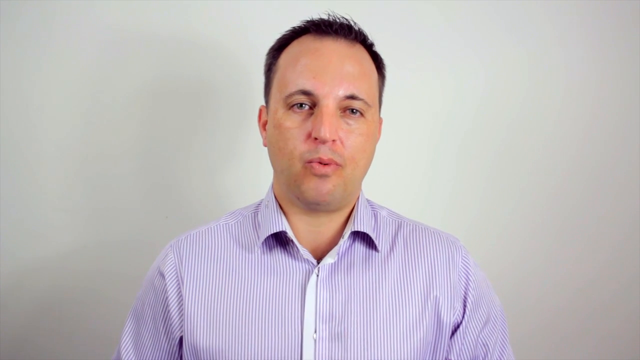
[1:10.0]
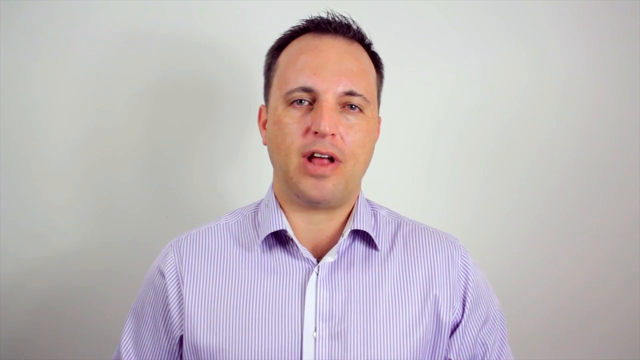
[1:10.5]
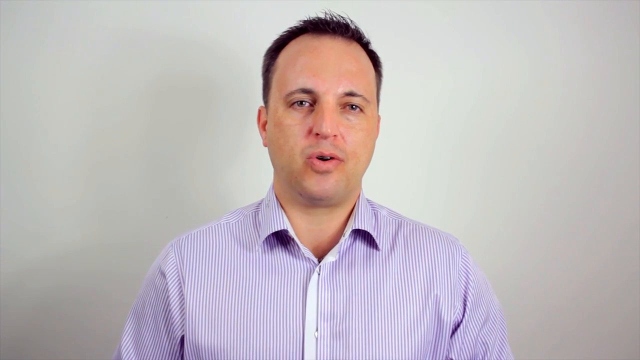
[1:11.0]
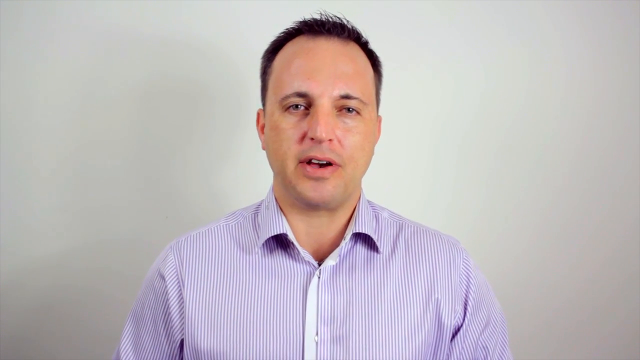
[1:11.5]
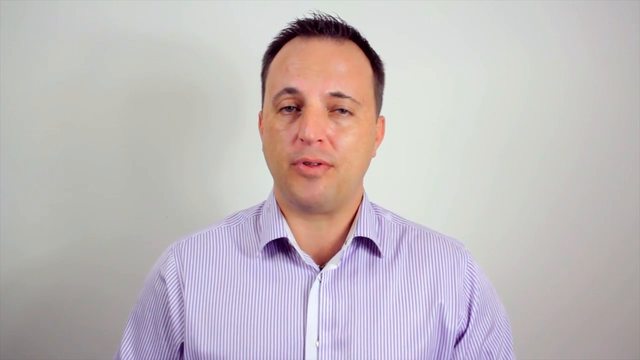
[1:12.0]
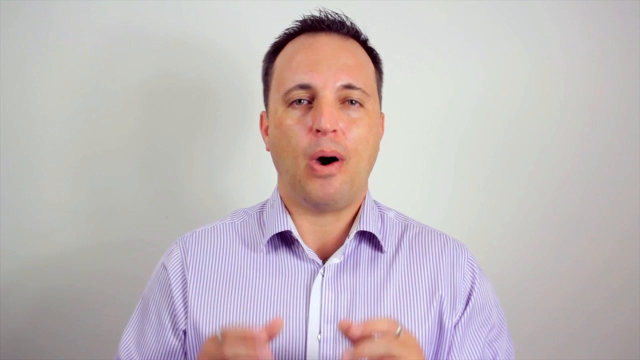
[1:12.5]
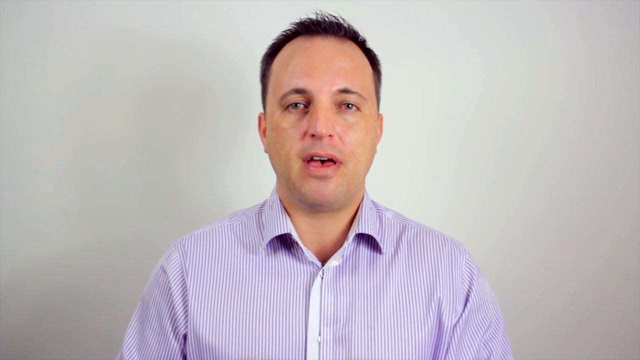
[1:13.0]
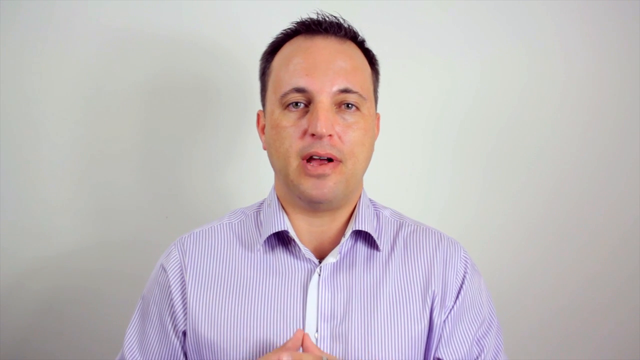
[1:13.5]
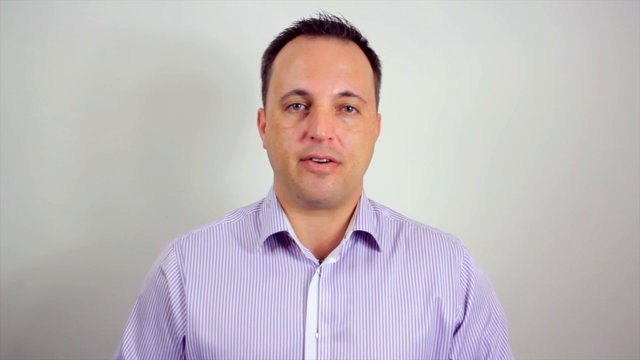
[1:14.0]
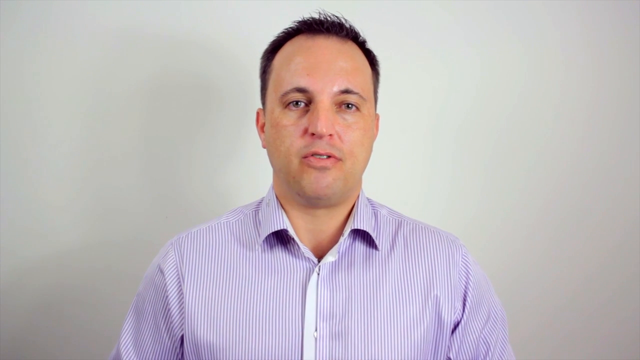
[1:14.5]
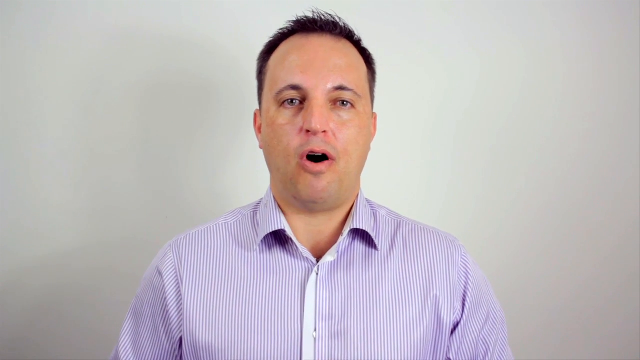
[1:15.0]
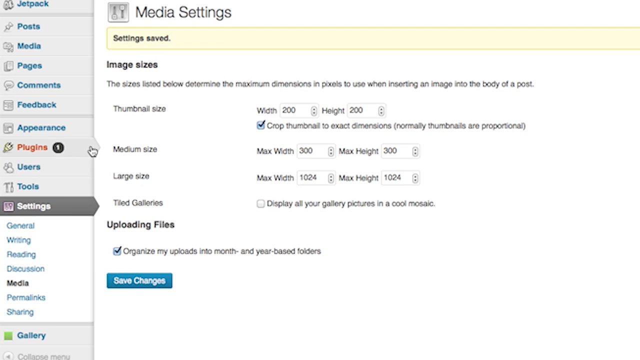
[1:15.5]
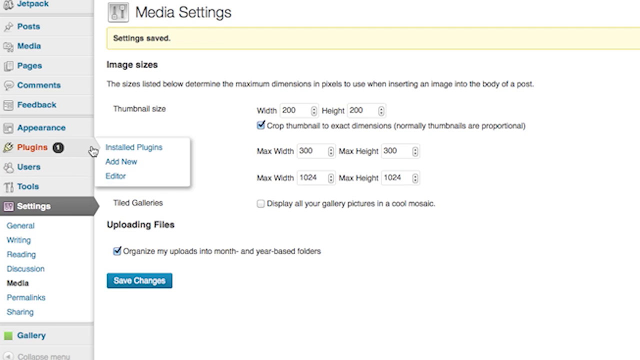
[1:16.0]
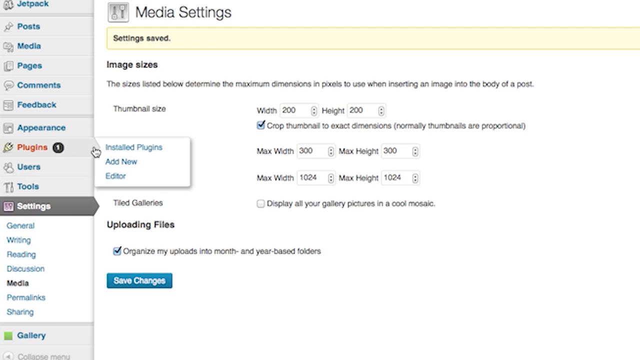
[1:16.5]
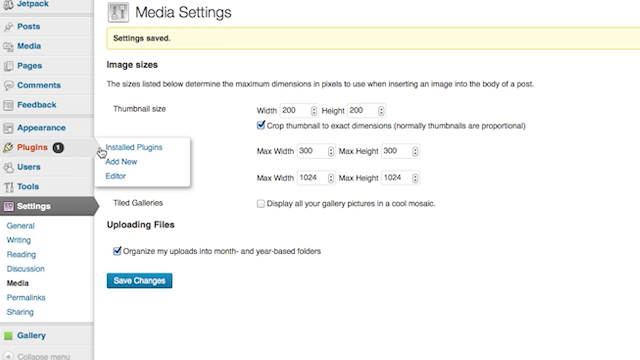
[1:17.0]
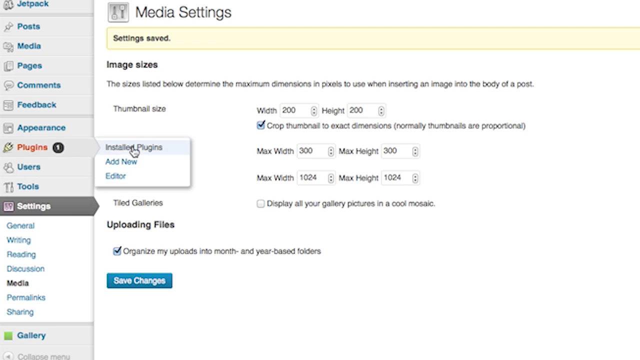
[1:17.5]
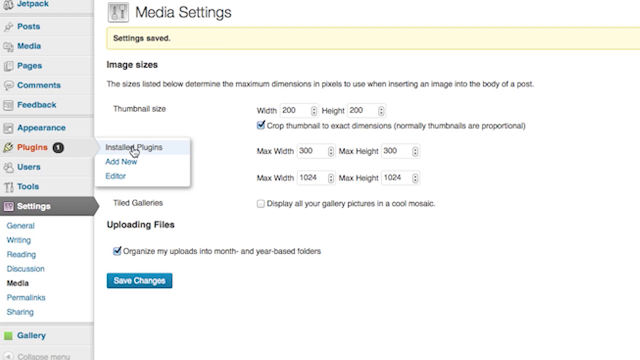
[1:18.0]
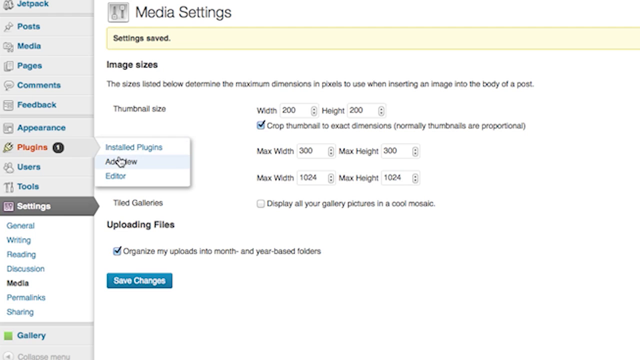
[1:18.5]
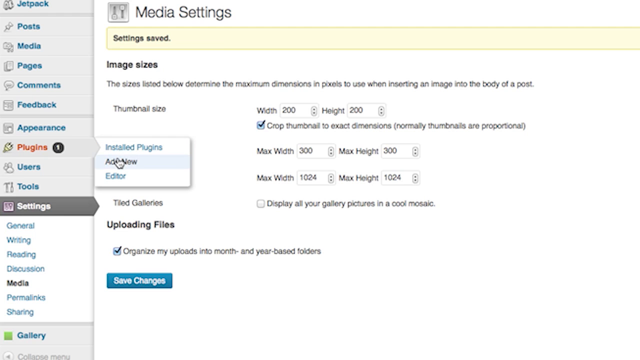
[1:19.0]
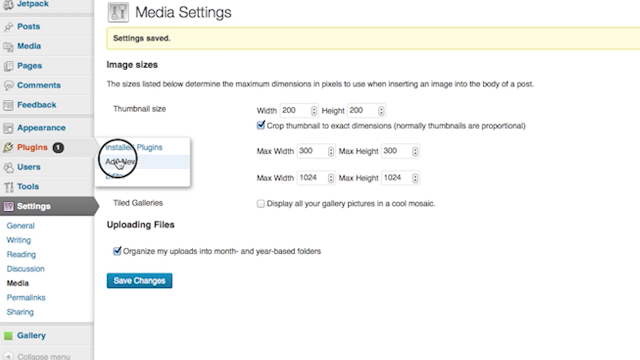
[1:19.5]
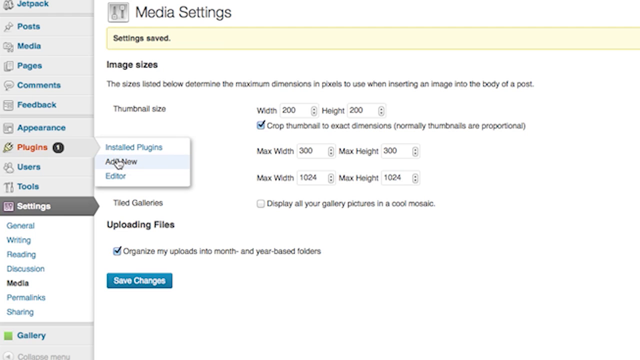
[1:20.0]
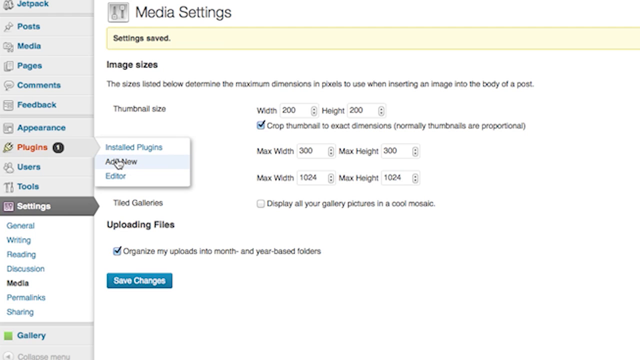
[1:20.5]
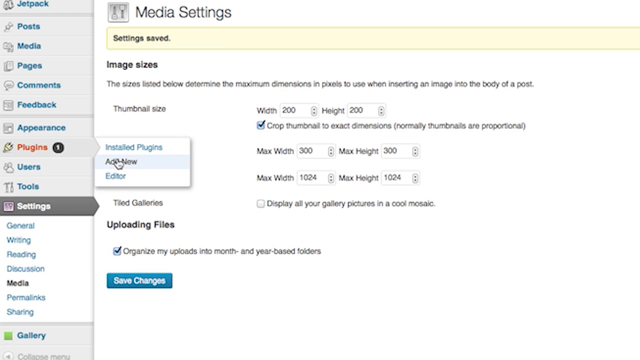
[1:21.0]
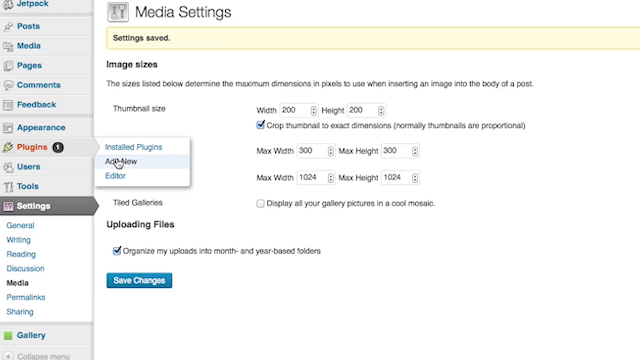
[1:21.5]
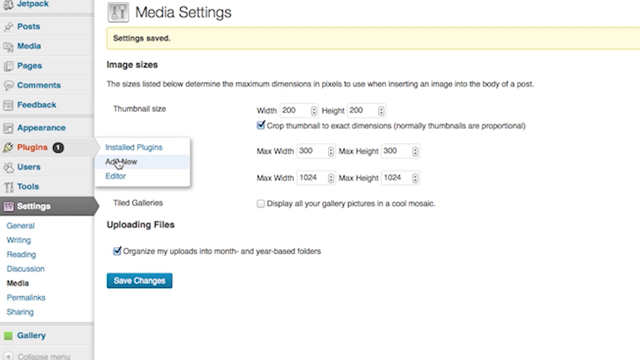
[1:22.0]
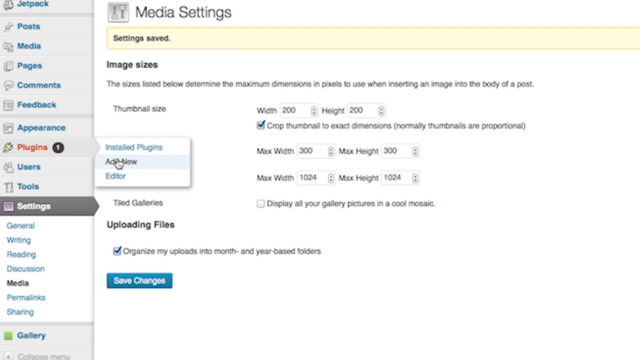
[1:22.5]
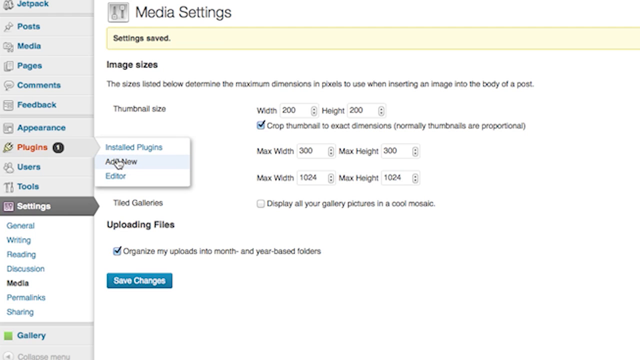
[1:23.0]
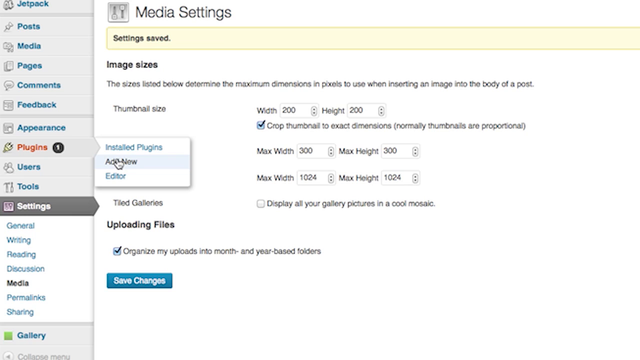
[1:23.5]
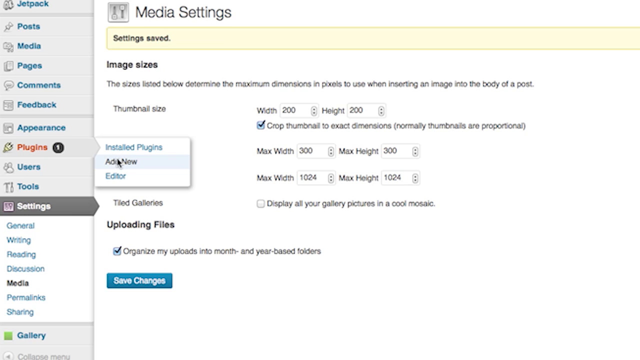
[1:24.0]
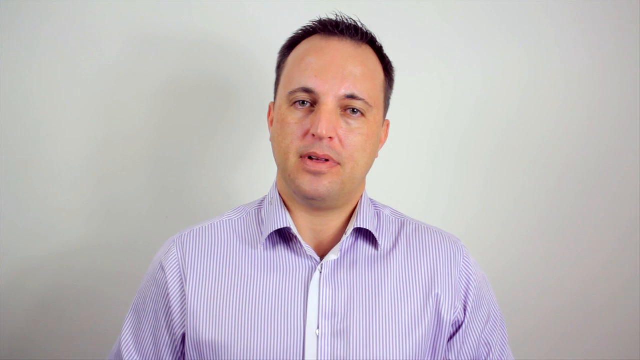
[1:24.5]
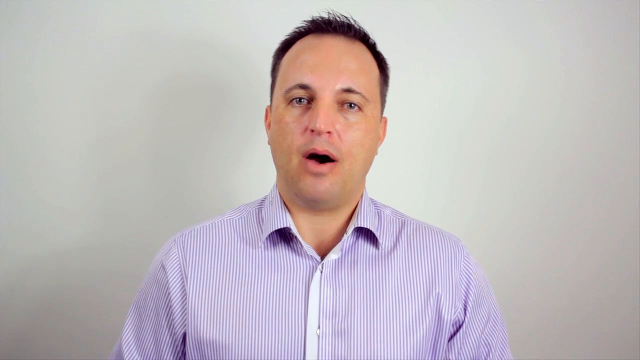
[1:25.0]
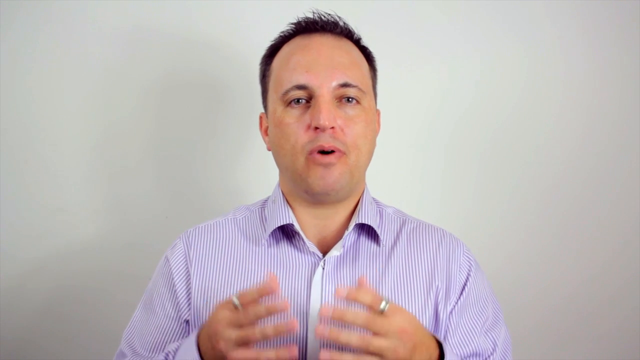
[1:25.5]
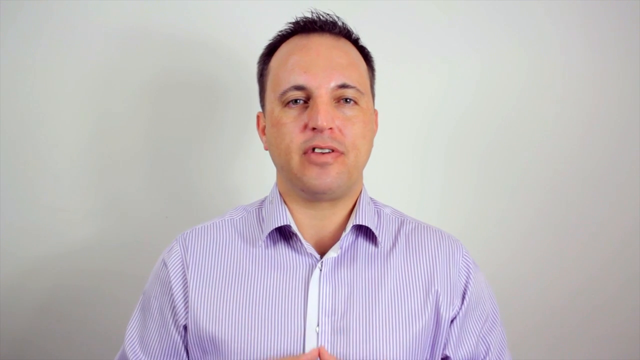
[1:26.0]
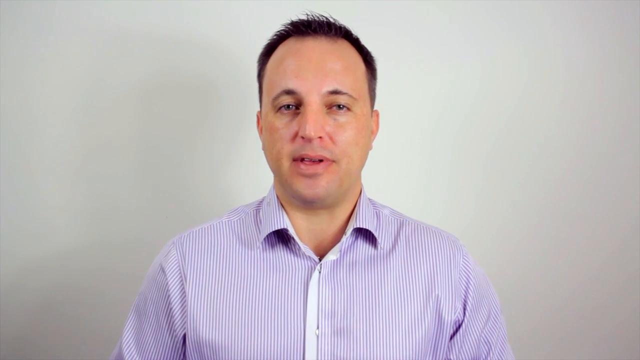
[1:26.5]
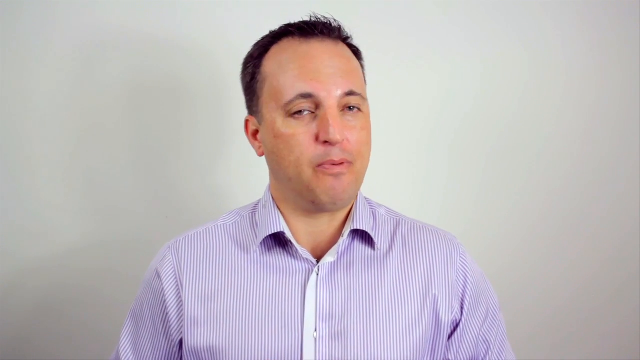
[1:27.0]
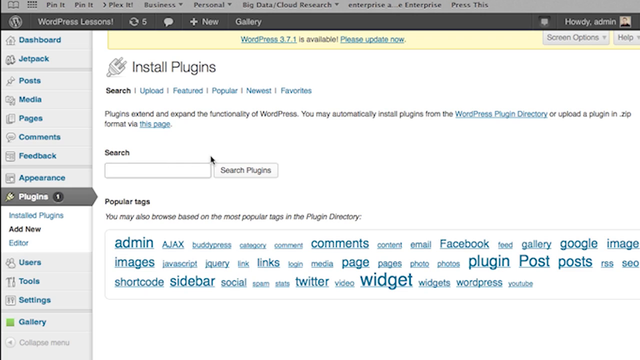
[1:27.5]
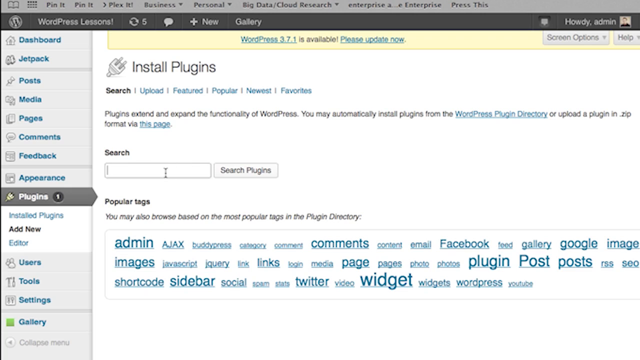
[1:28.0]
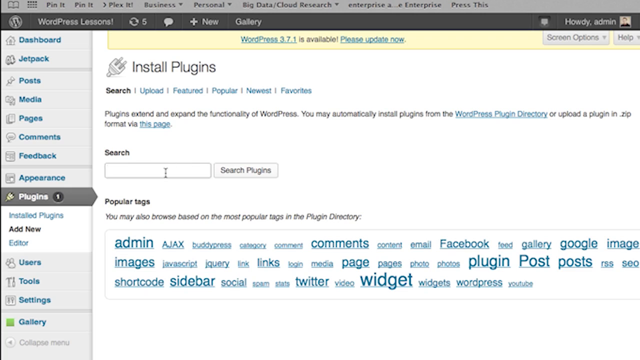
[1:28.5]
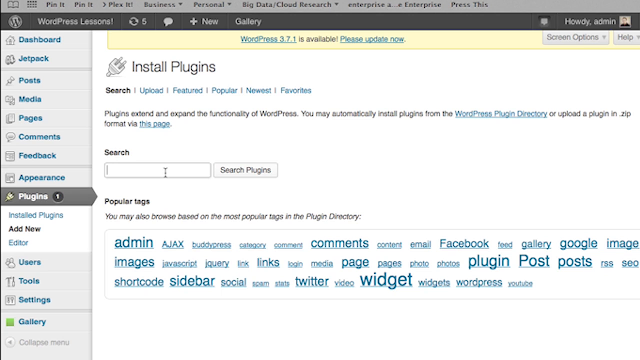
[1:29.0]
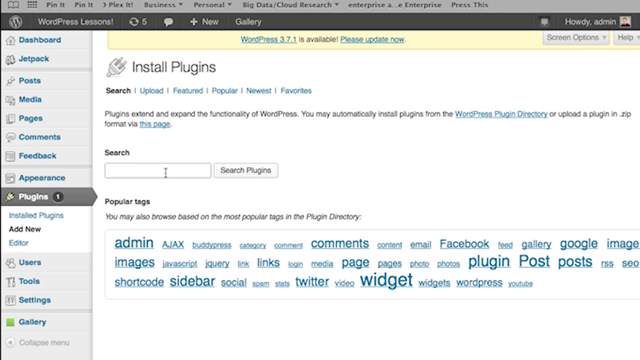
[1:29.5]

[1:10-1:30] The man talks toward the camera in a portrait shot. The video then moves to another screen, where he hovers over the plugins menu on the left-hand side of the WordPress dashboard; it shows "installed plugins" and "add new", and a small black circle highlights the add new button, which he clicks. After another shot of him talking toward the camera, the screen reads "install plugins" and he types into a search box labeled "search", entering "post thumbnails". To the right is a button that says "search plugins", so he is probably looking to add a new plugin.